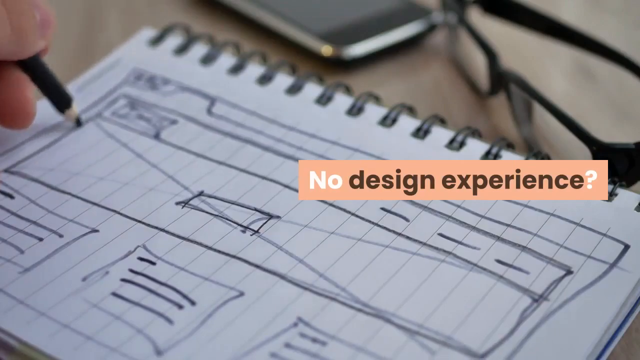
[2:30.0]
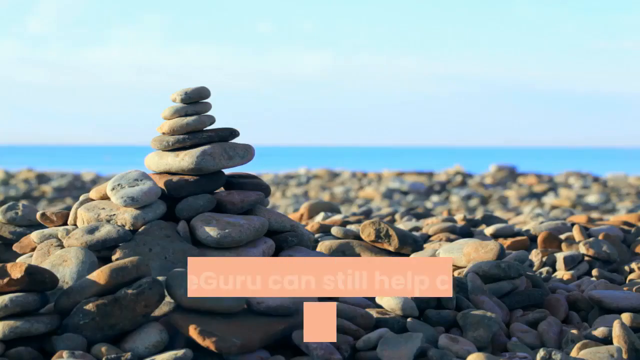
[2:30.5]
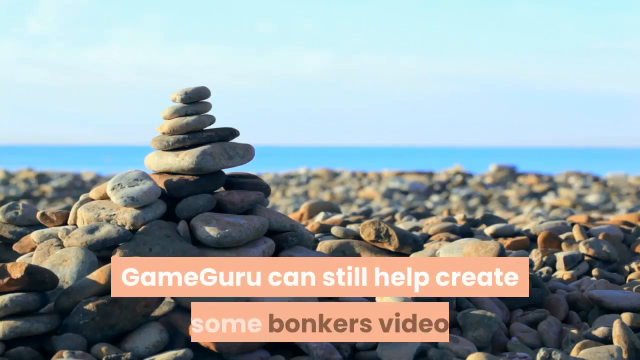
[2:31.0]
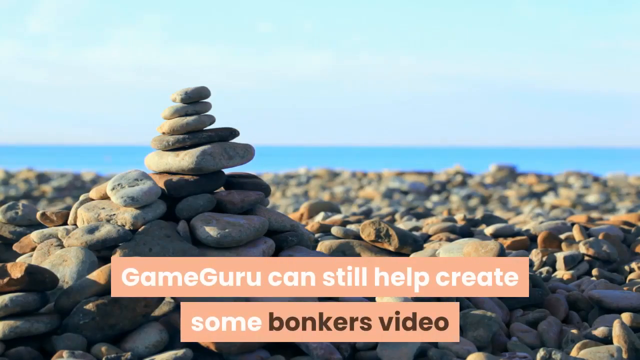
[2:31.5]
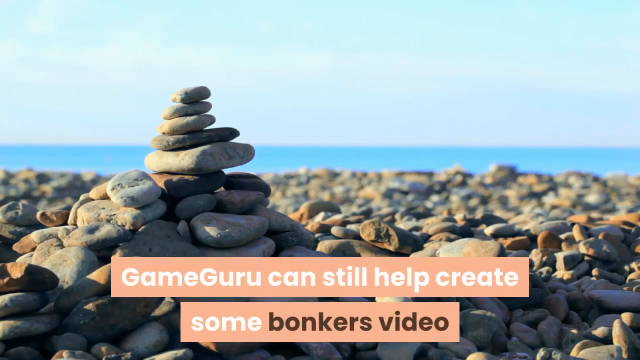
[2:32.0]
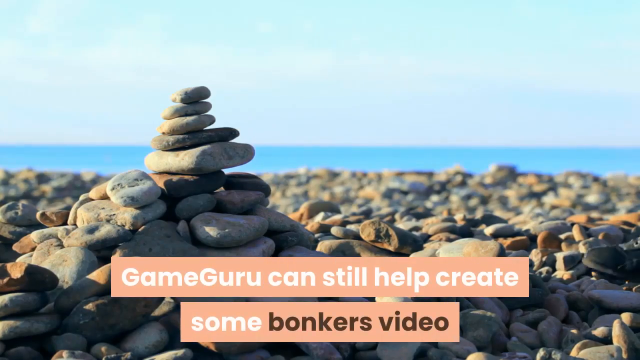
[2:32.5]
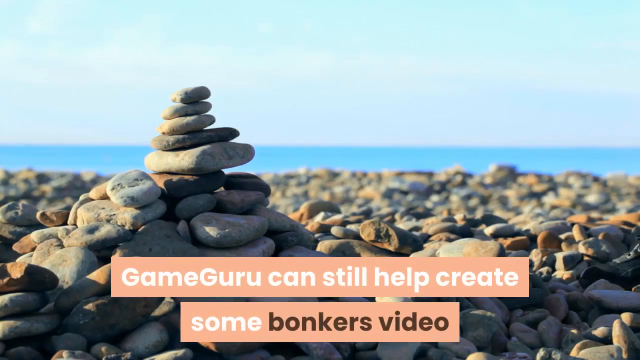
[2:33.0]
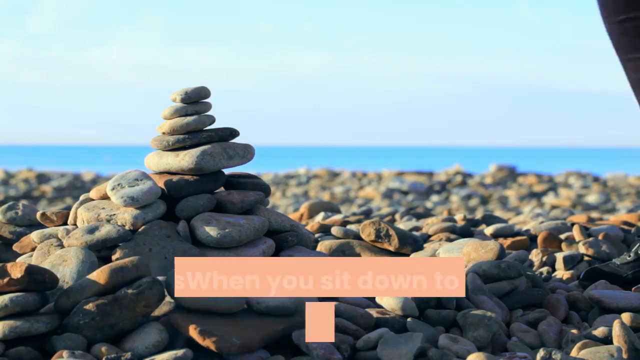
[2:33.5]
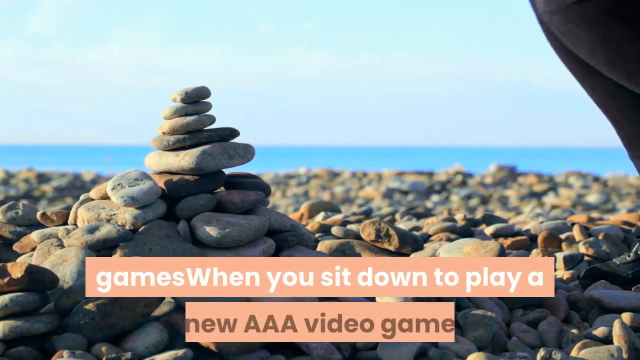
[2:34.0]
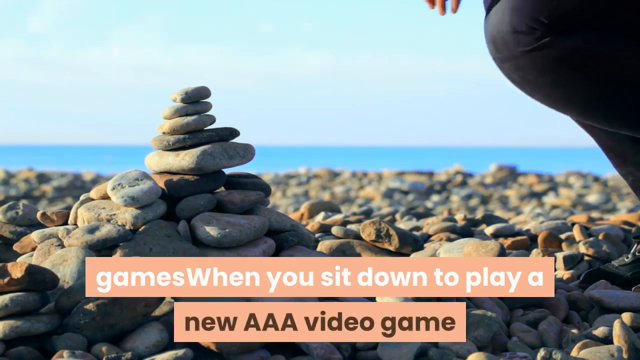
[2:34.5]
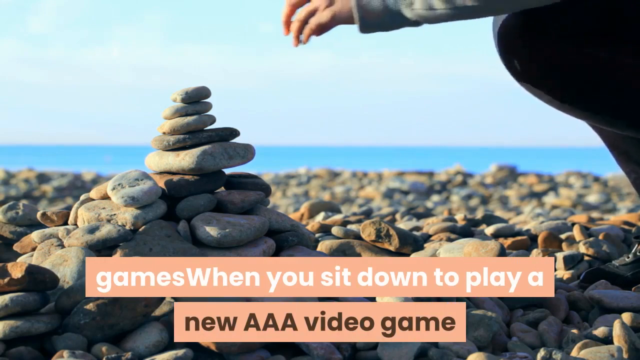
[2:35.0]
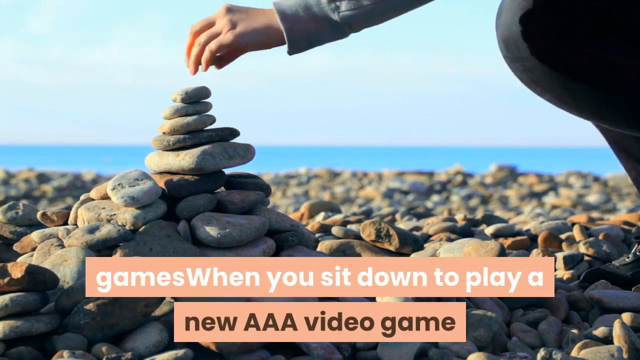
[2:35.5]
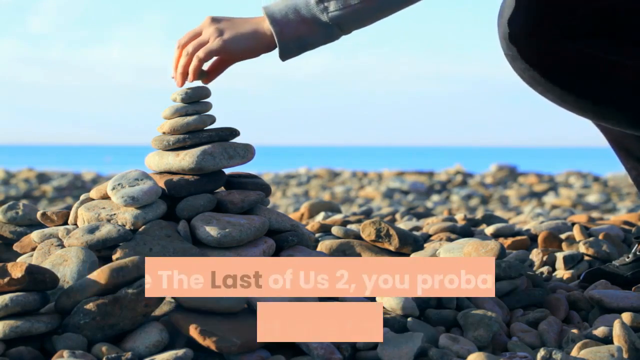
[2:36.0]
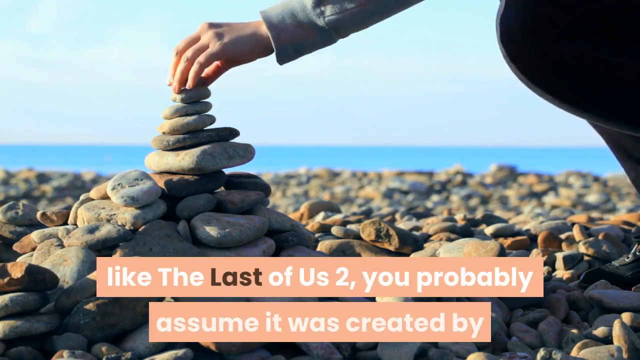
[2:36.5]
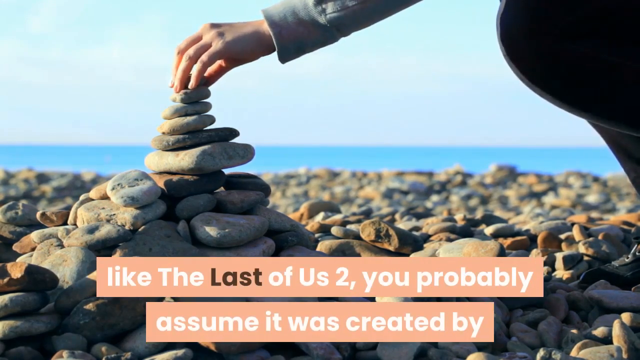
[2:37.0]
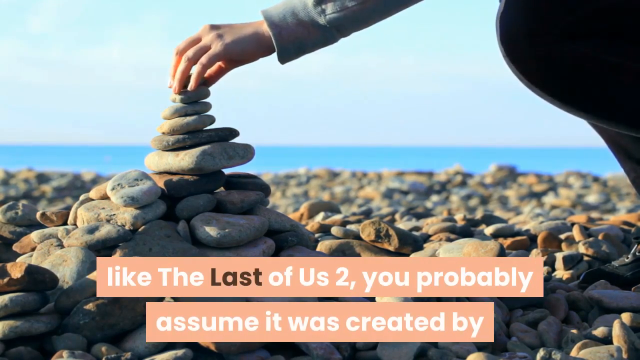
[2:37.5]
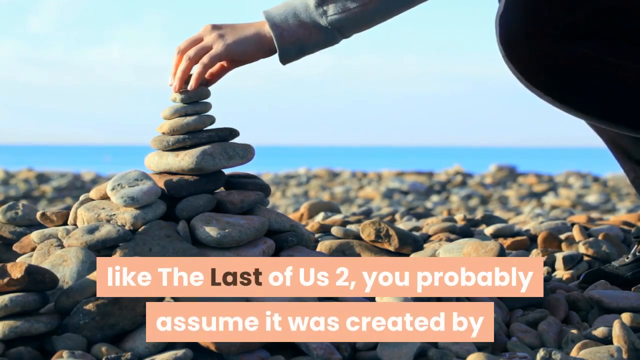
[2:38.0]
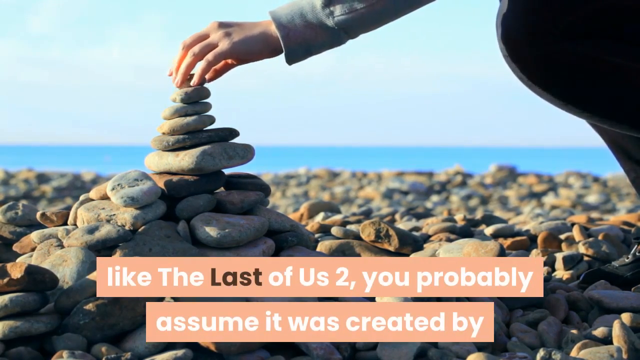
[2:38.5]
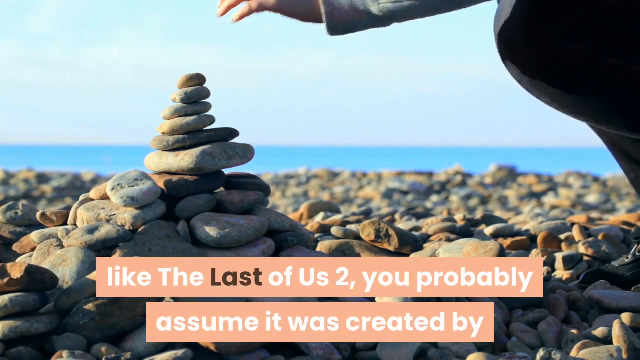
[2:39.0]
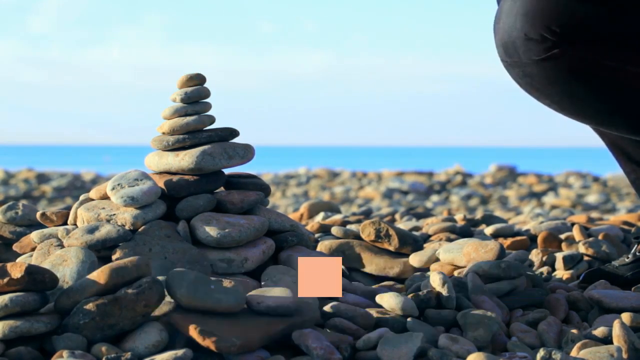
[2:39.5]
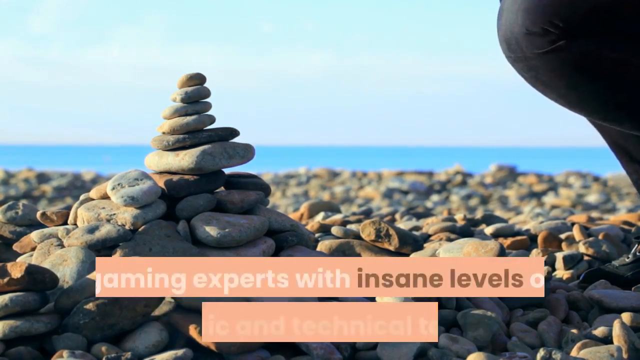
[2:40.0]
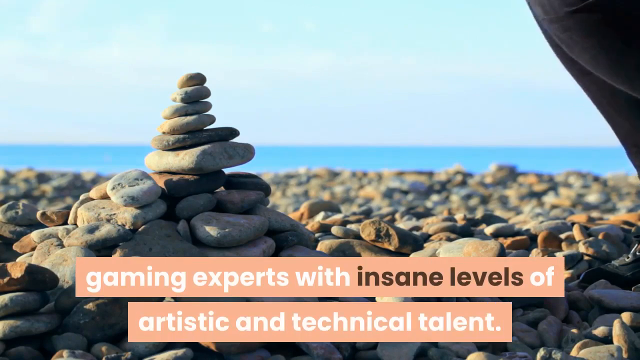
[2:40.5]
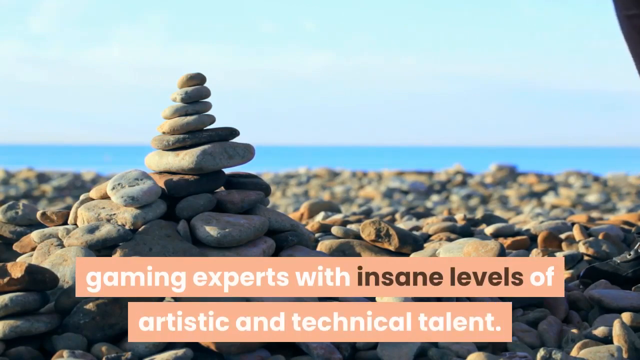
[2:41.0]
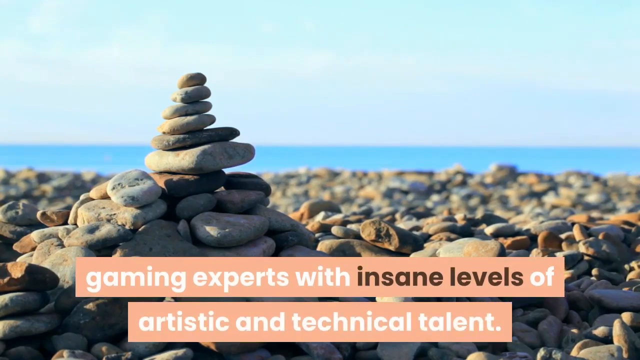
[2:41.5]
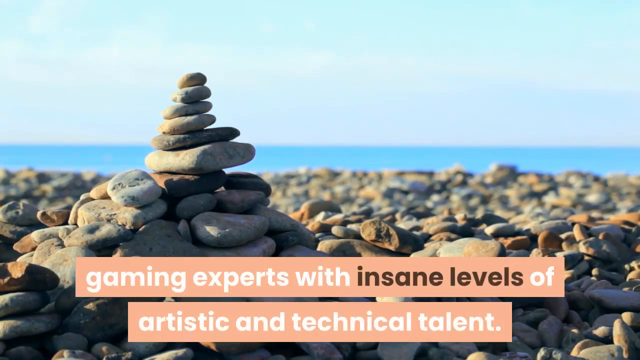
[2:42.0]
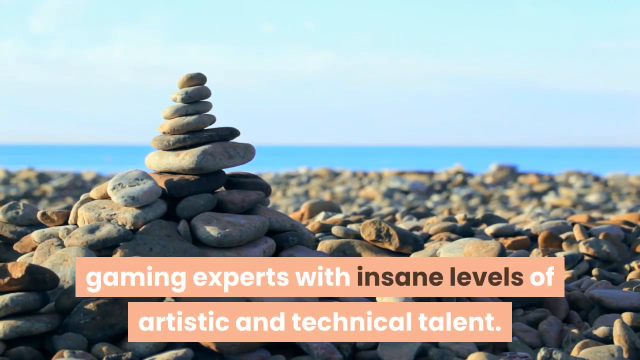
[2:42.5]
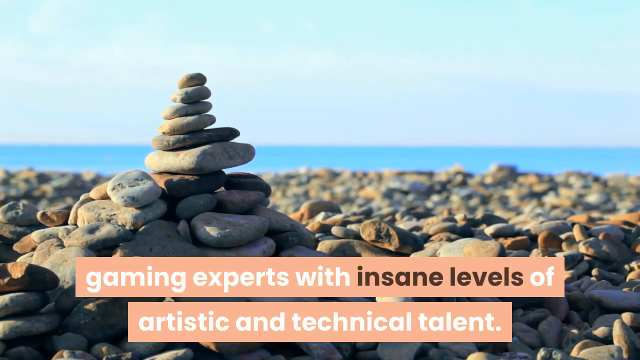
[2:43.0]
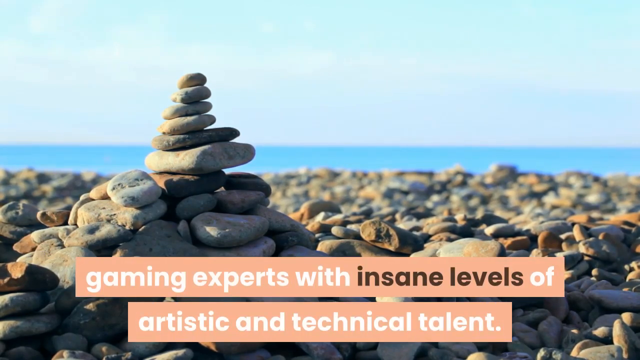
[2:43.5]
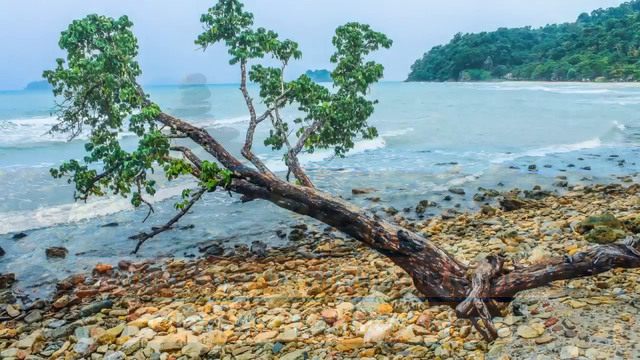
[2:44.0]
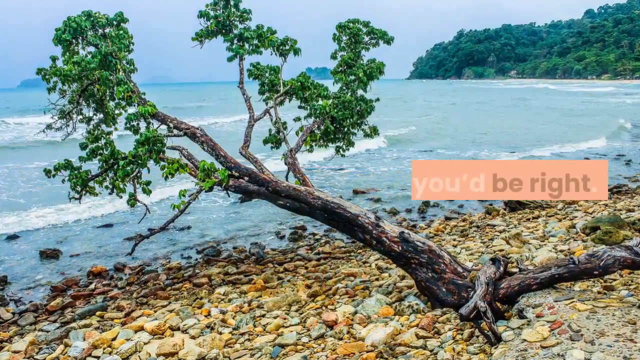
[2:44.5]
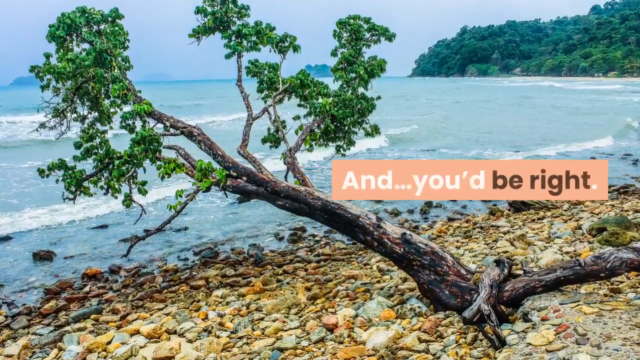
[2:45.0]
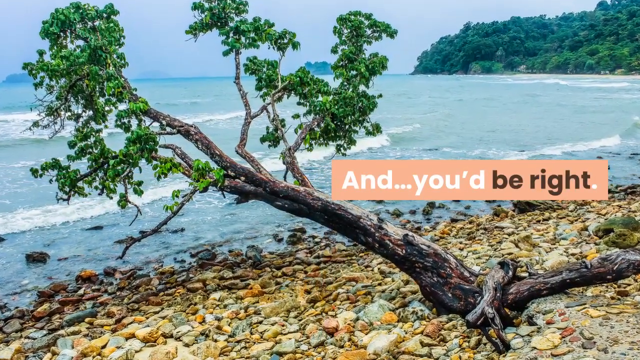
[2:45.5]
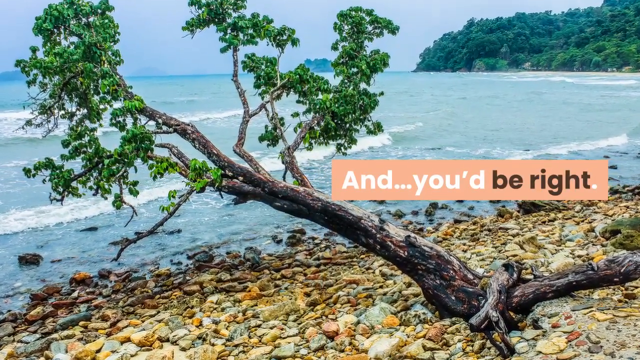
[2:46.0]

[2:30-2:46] A new background looks like a beach covered in pebbles, some of them stacked into a small tower. Text underneath reads "Game Guru can still help create some bonkers videos", in a pink border, in white and black, with "bonkers video" in black. The text continues: "games when you sit down to play a new AAA video game". A hand appears in the background video; it looks like someone is crouched on the pebble beach, and they place another pebble on top of the pebble tower before removing their hand. The text continues: "like the last of us two, you probably assume it was created by gaming experts with insane levels of artistic and technical talent." Another background appears that looks like it could be the same pebbled beach, this time with a sea view and a tree that looks slightly bent.